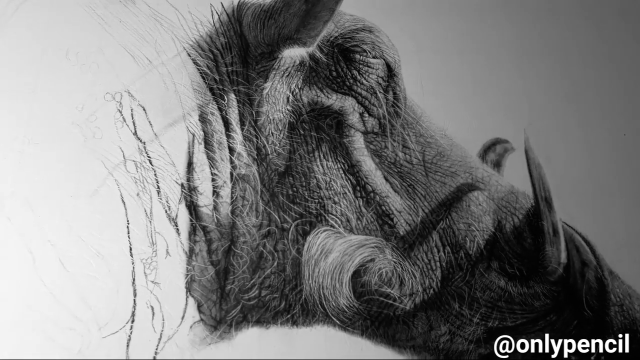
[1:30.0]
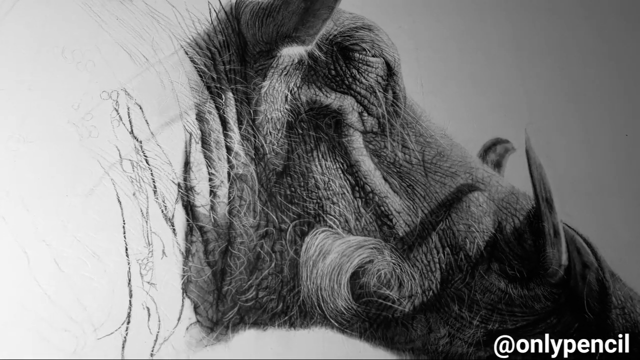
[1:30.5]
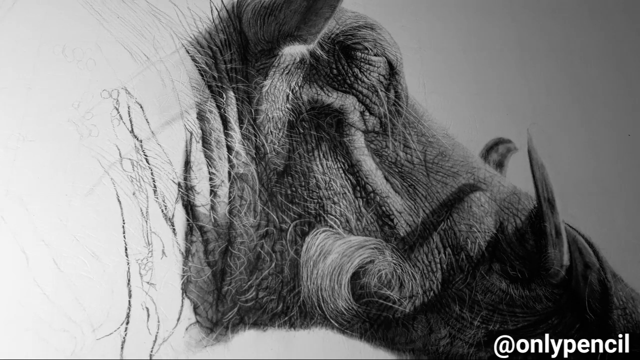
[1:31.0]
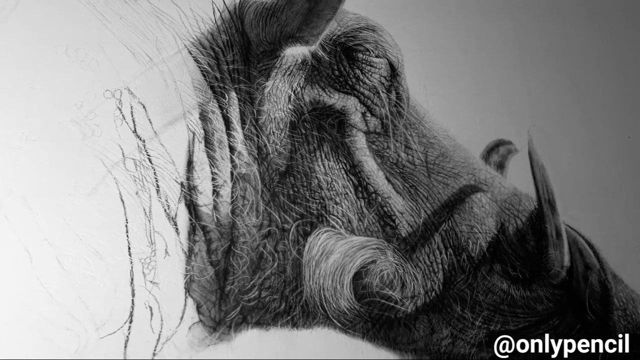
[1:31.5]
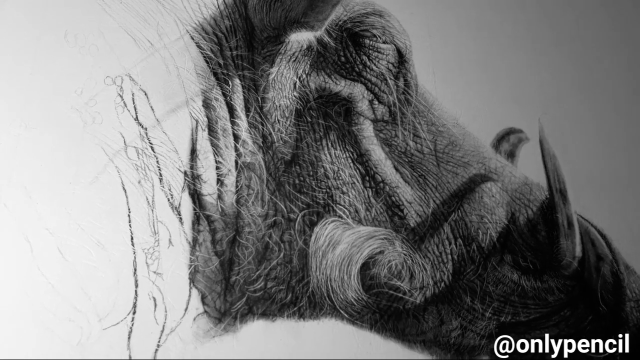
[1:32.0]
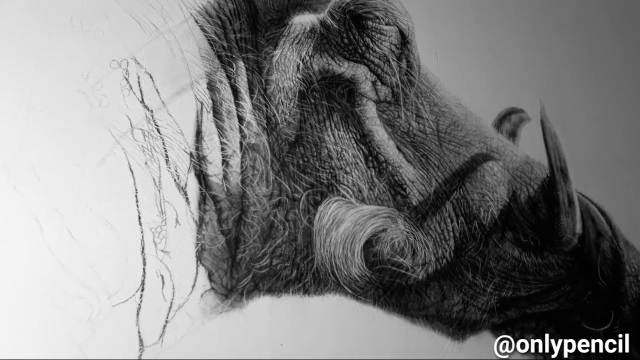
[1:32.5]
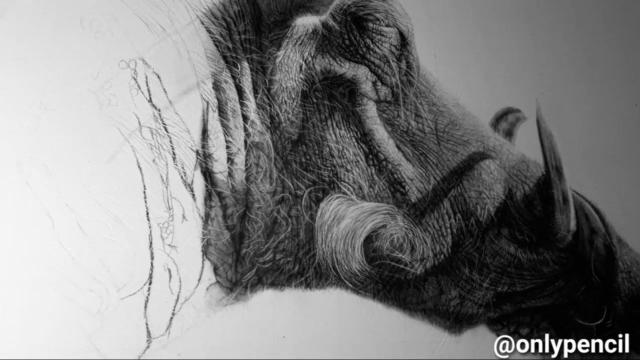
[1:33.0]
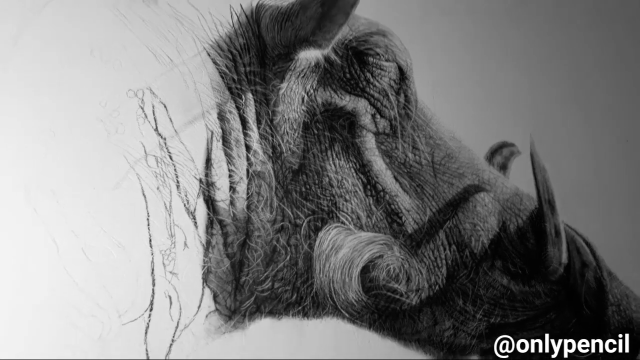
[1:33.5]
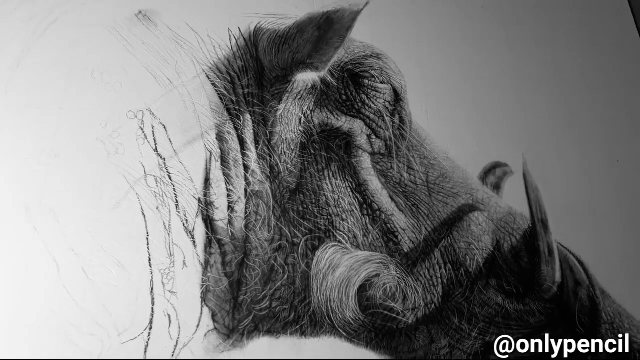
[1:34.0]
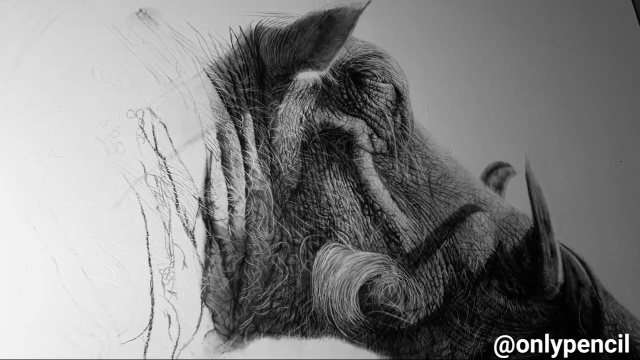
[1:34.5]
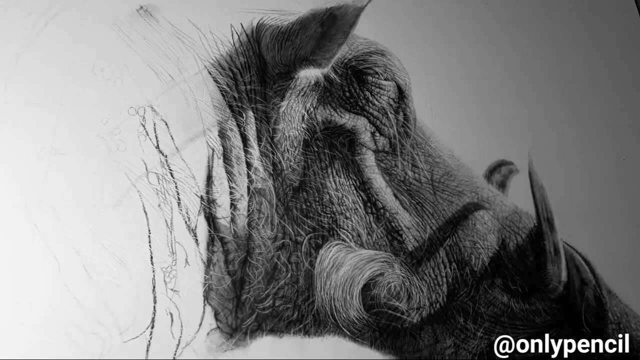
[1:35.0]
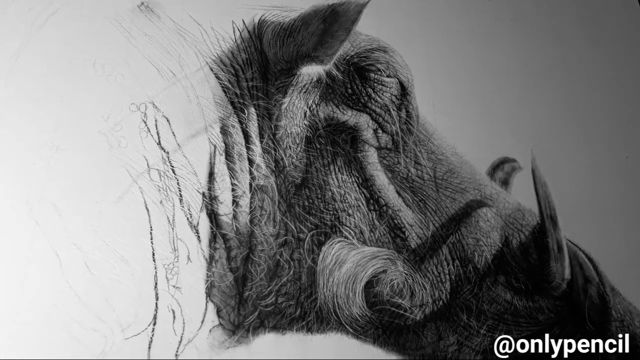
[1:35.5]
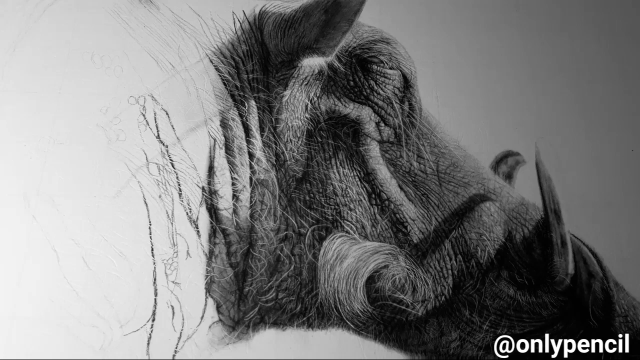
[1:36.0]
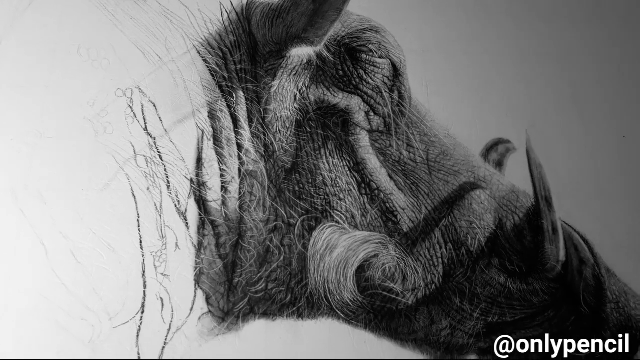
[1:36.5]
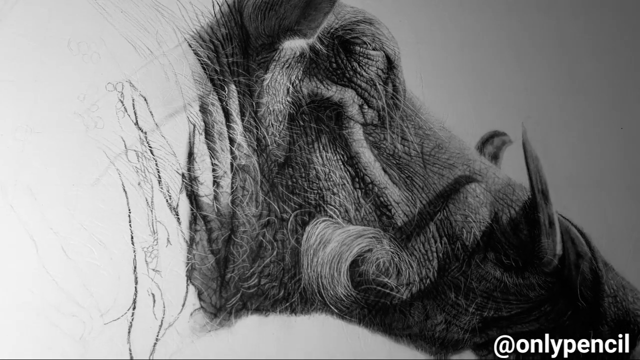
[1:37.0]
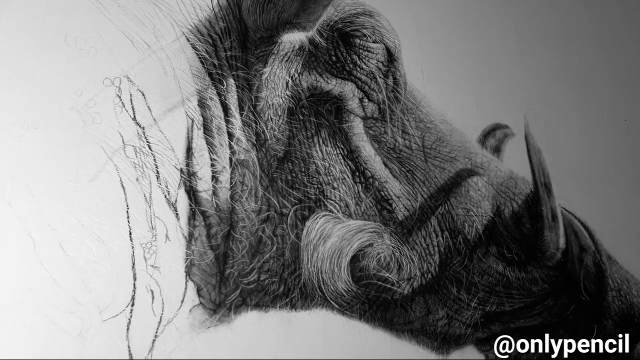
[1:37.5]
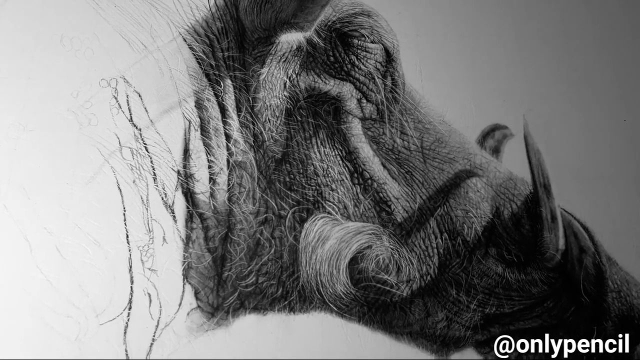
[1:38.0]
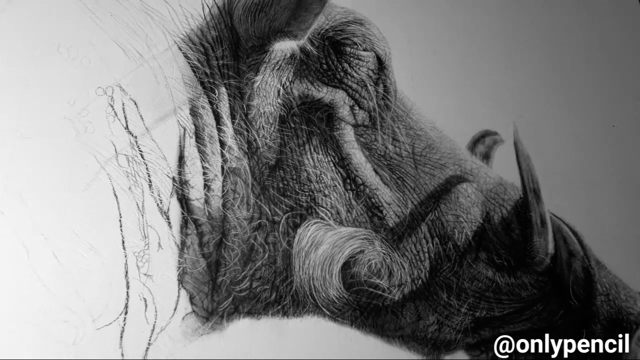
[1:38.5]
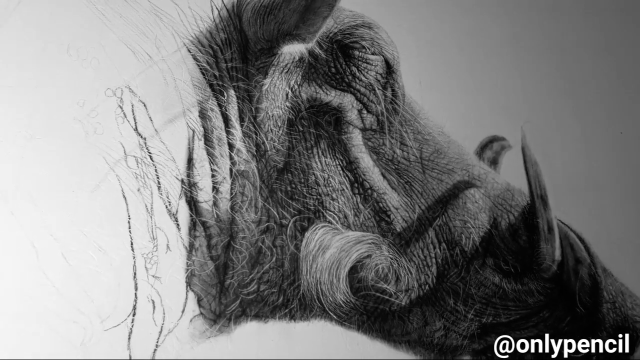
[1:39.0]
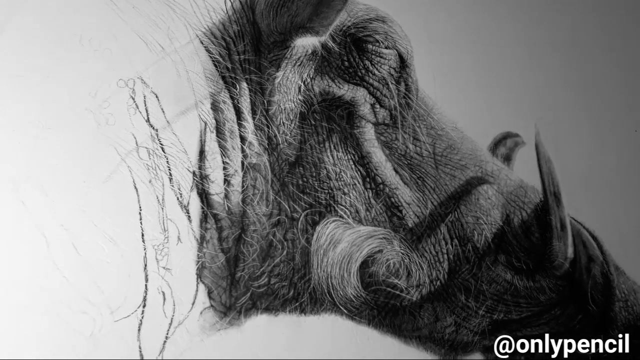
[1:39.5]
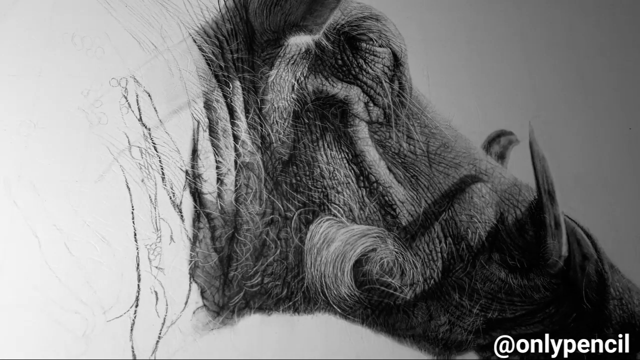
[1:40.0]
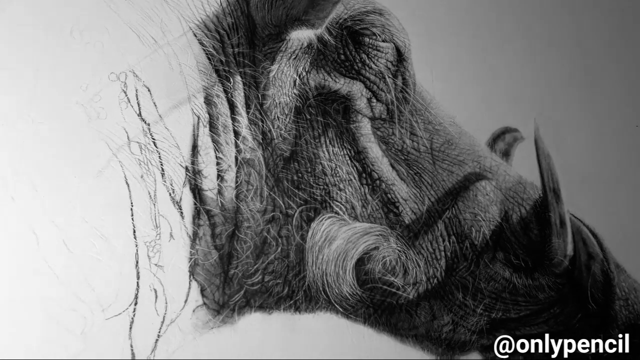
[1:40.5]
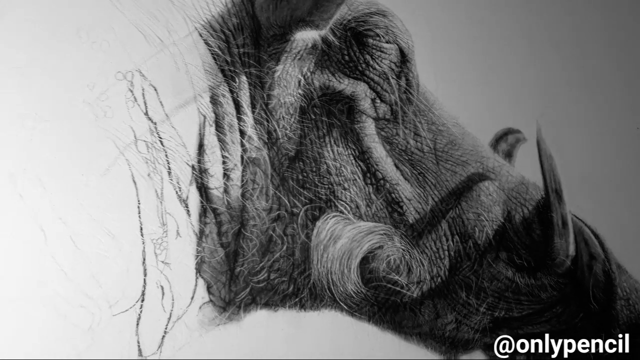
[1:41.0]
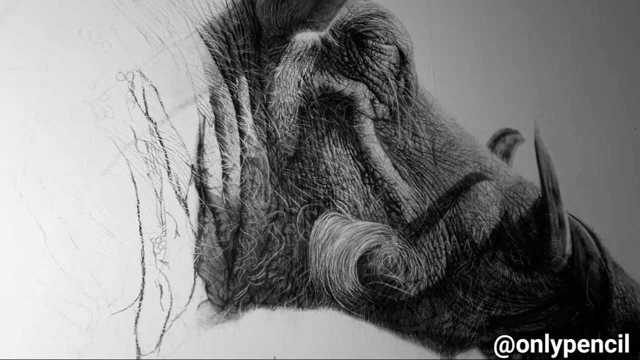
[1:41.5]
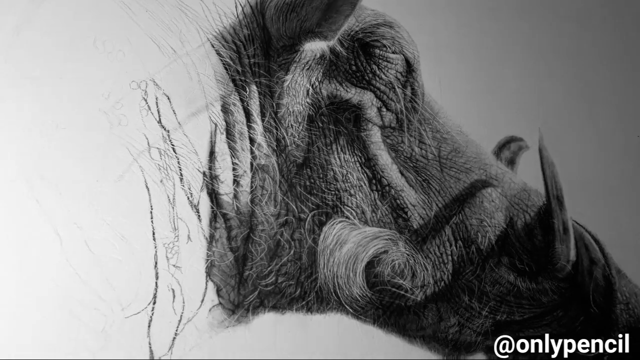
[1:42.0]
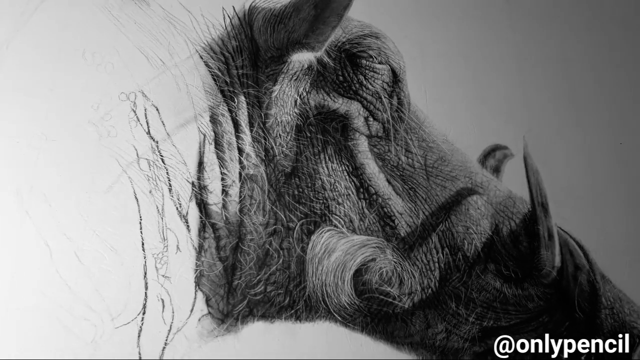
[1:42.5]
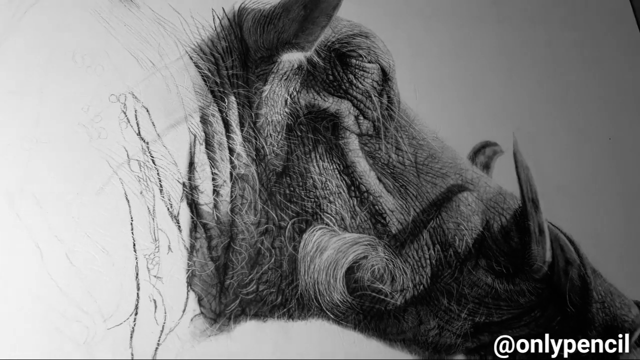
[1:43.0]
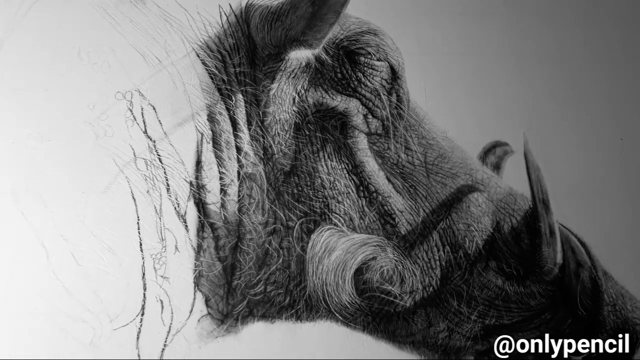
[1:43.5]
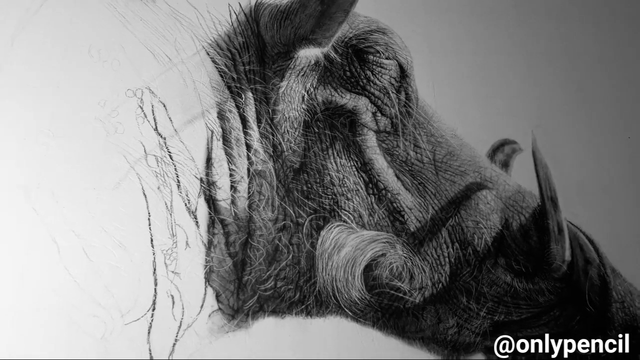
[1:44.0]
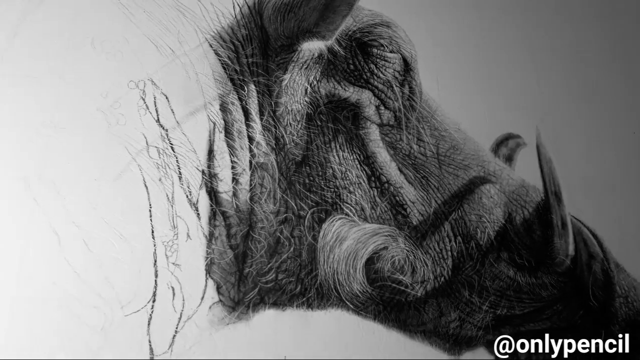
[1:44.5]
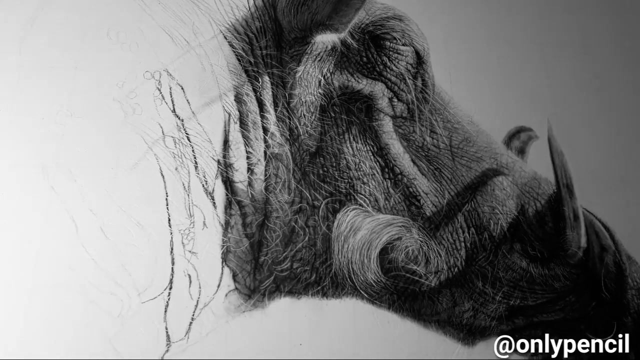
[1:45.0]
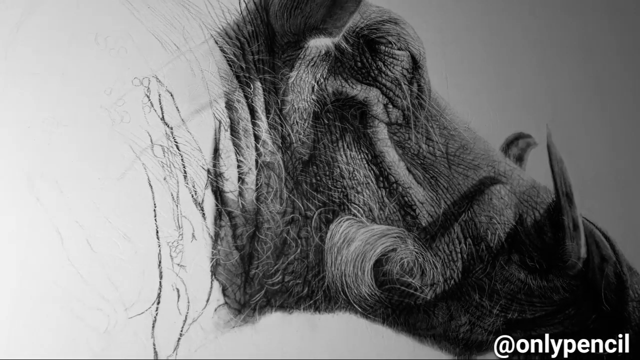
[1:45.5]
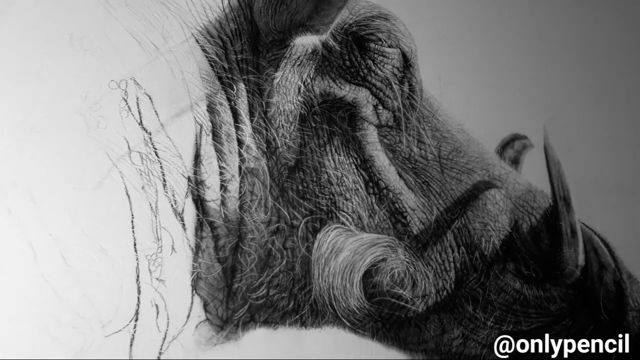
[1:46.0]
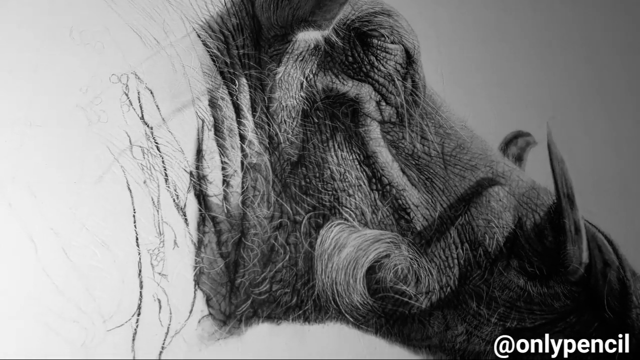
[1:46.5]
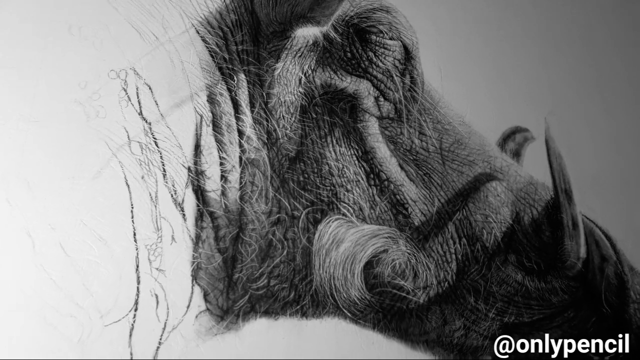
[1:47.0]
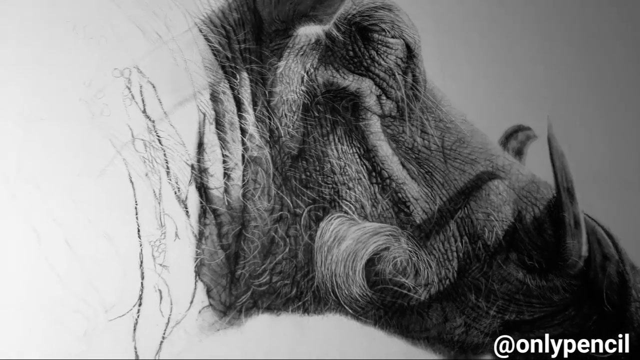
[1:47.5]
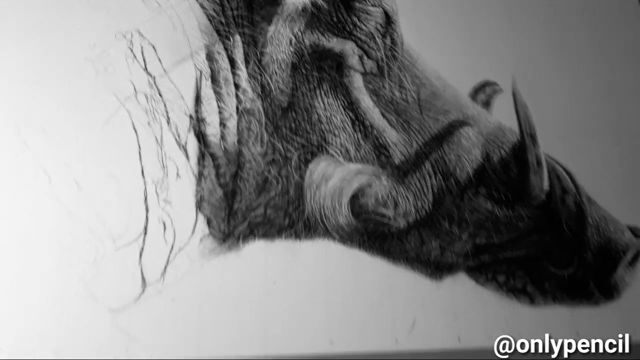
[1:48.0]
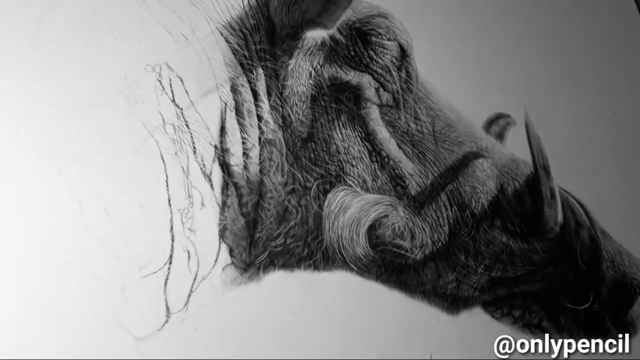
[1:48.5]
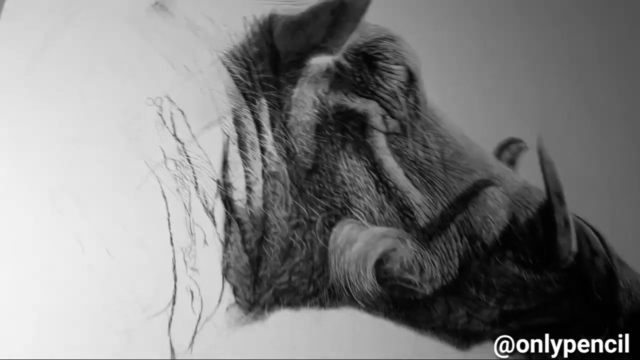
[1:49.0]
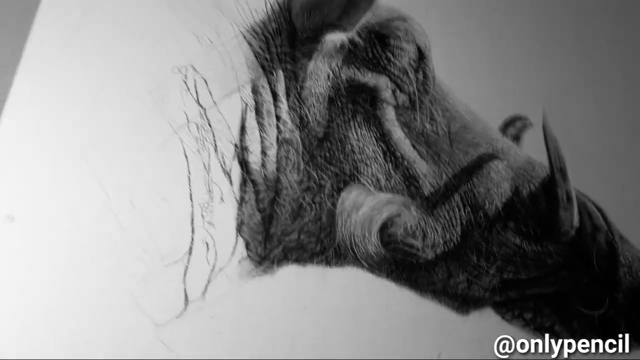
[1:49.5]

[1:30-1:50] The camera stays zoomed in close on the head, with the tip of the nose off screen in the bottom right corner. About an inch forward from where the ridge comes down and goes behind, and an inch down from the top of the nostril, is the horn. Because the nose is tilted, the horn goes straight up, higher than the top of the nose, to a point about an inch and a half above it. In front of the horn there is big, heavy wrinkling, and there is also wrinkling behind the ear. Halfway down the neck there are about four or five big, thick folds of wrinkles with some hairs around them; from there back there is only a little sketching. The camera is still a little shaky. It moves up a little, showing the whole ear, then pans down a little, still shaking and focused on this portion. "Only pencil" is still in the bottom corner. The camera pans out far enough to show the nose for about a second, then moves back in a little closer.